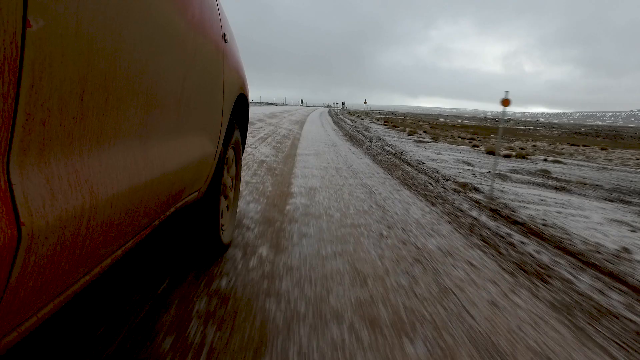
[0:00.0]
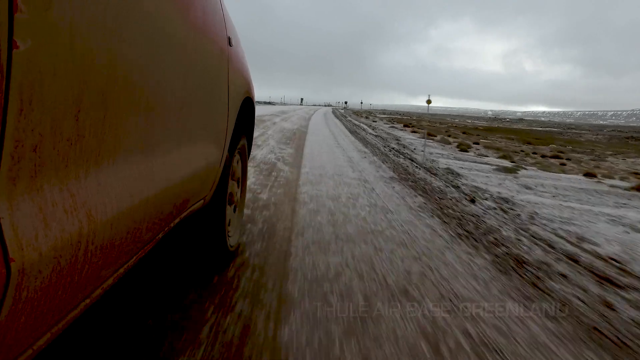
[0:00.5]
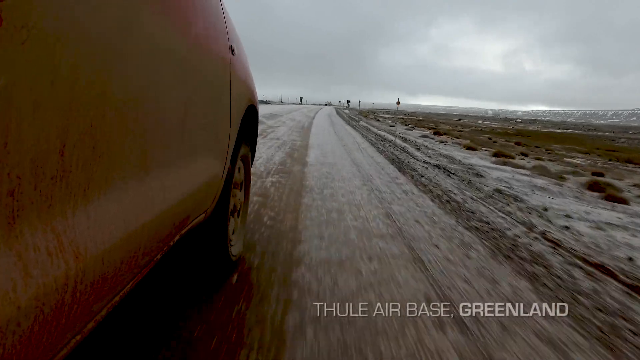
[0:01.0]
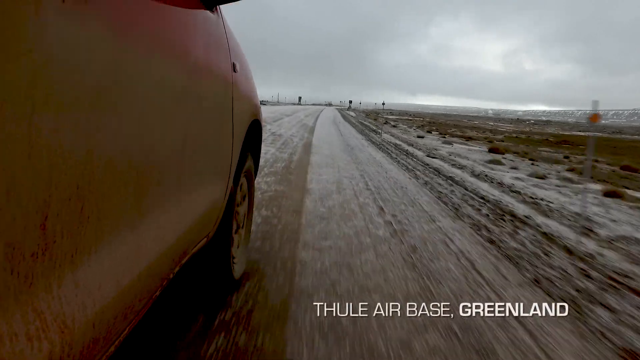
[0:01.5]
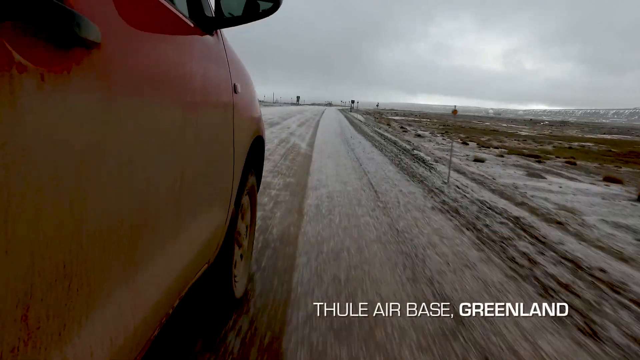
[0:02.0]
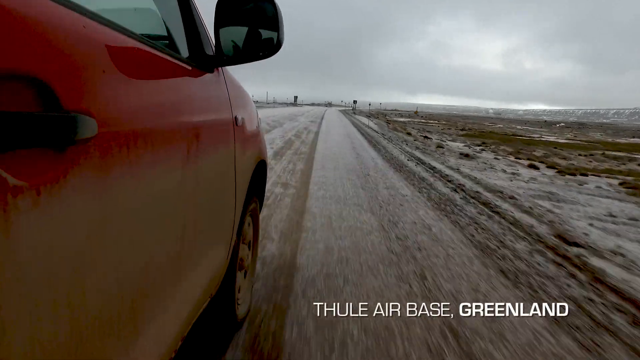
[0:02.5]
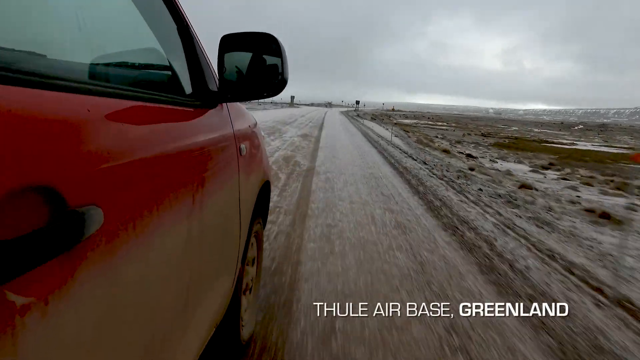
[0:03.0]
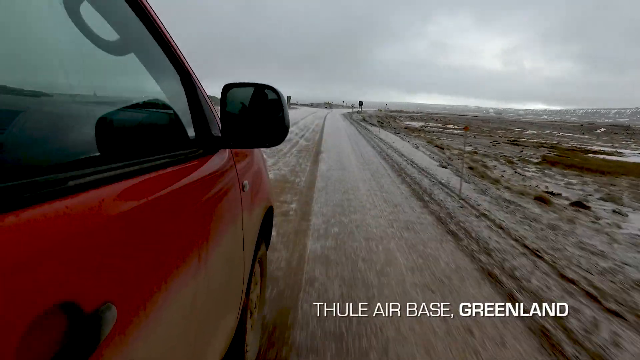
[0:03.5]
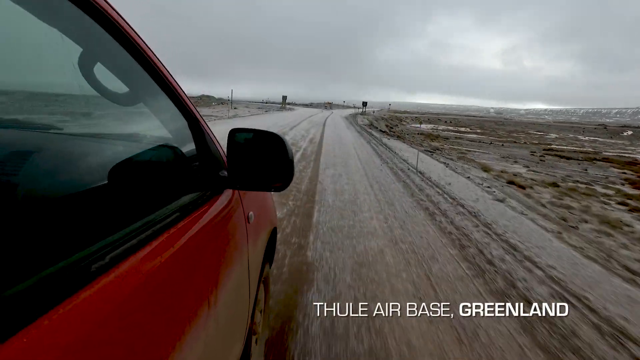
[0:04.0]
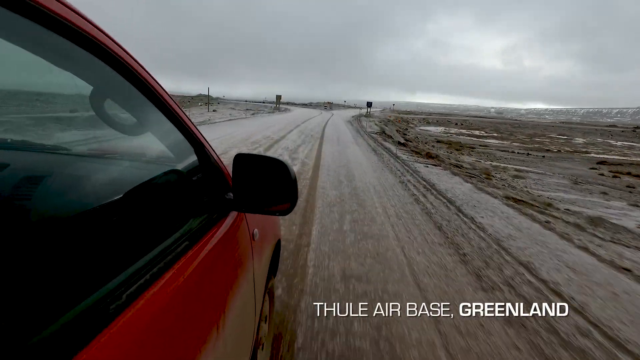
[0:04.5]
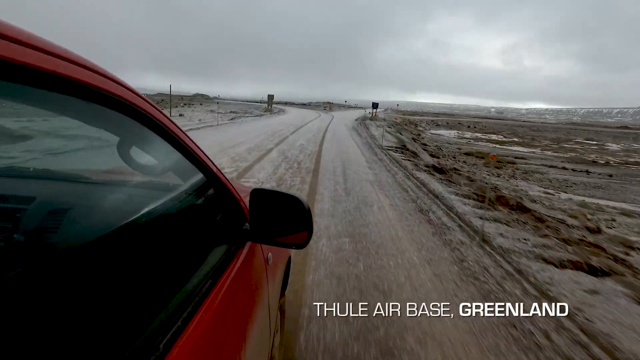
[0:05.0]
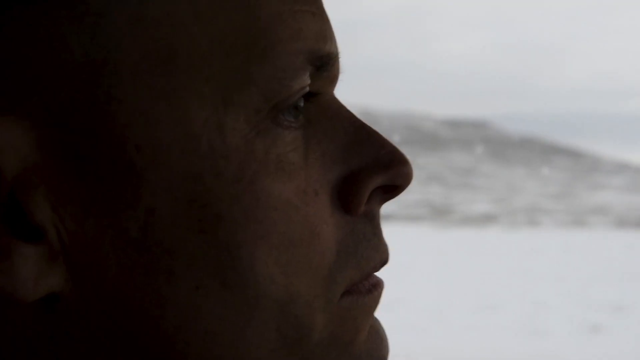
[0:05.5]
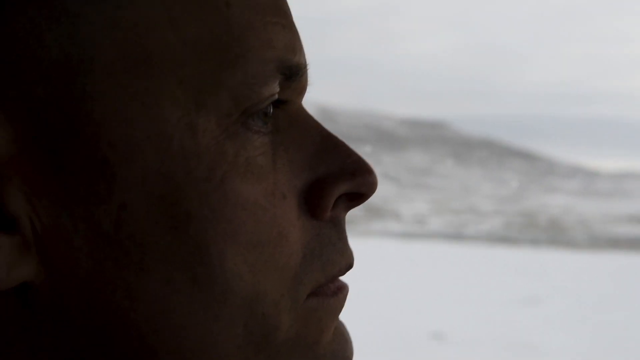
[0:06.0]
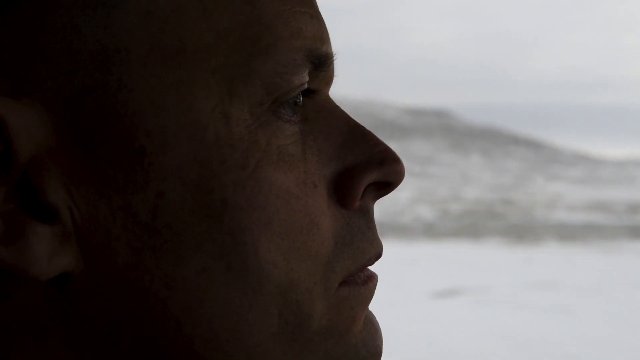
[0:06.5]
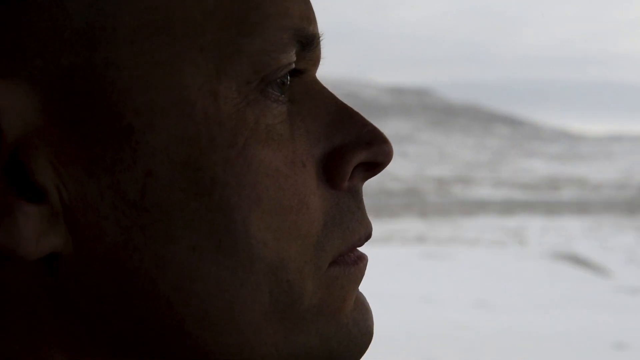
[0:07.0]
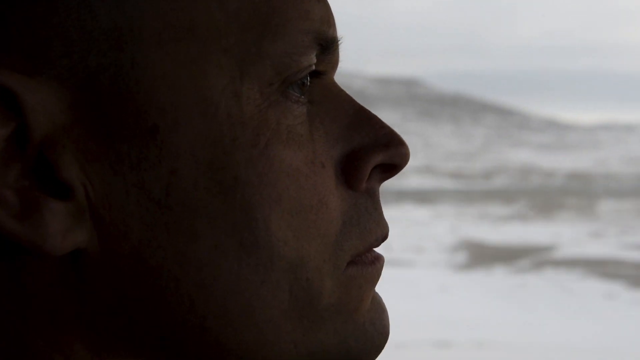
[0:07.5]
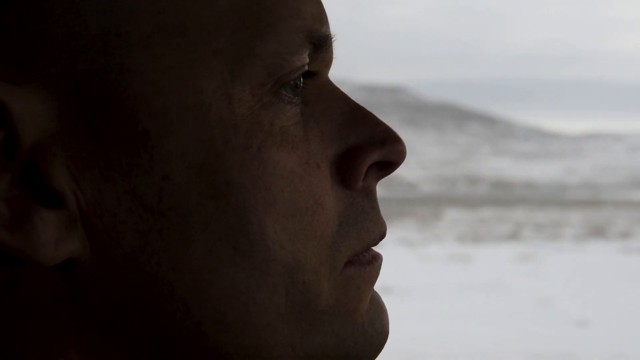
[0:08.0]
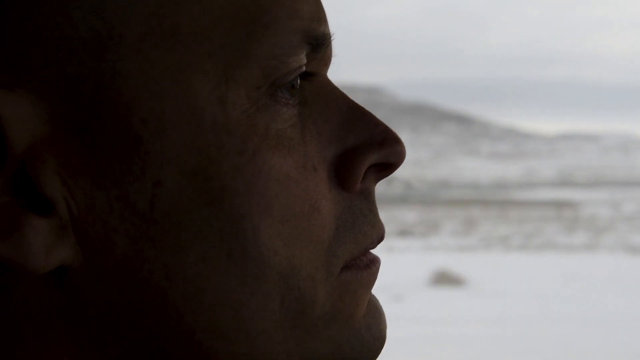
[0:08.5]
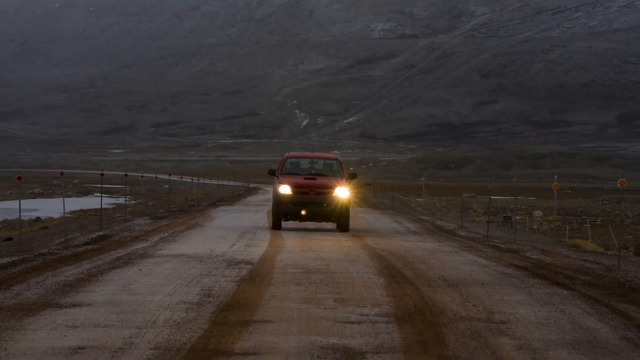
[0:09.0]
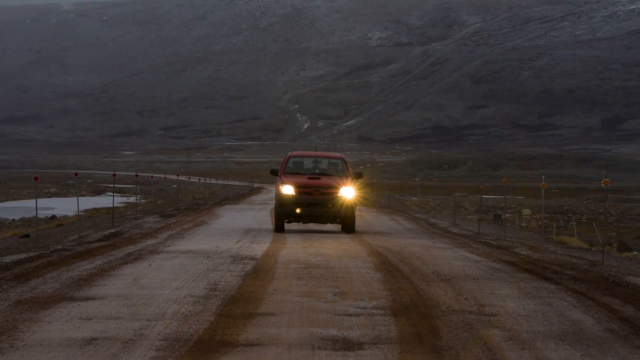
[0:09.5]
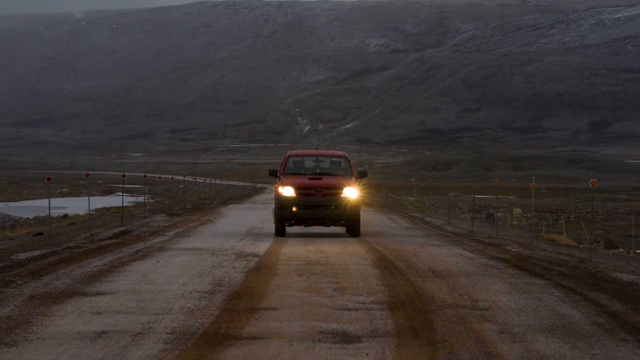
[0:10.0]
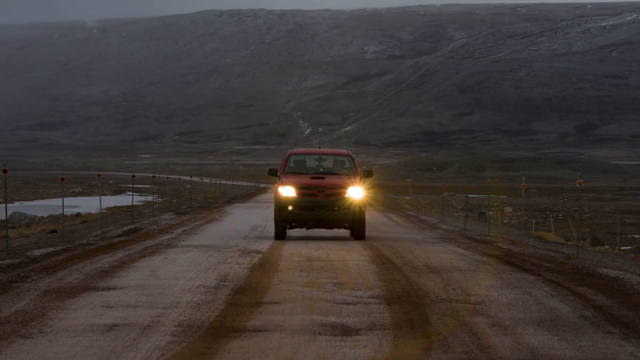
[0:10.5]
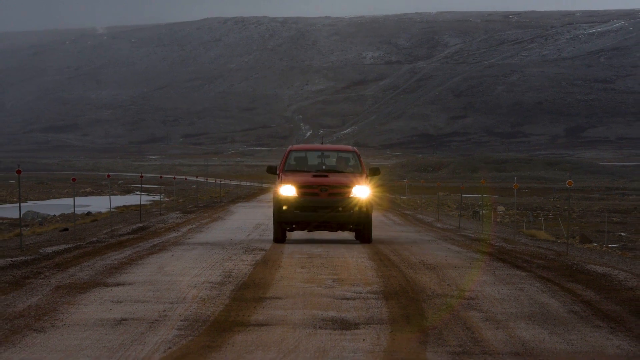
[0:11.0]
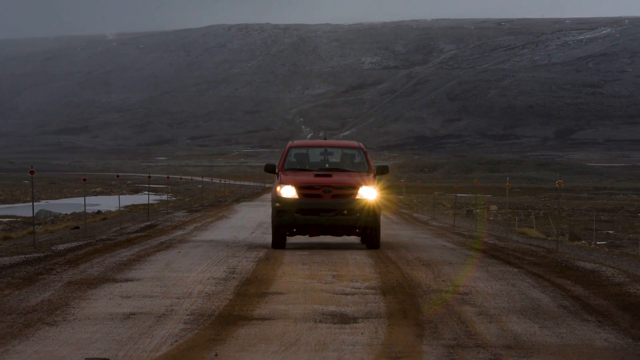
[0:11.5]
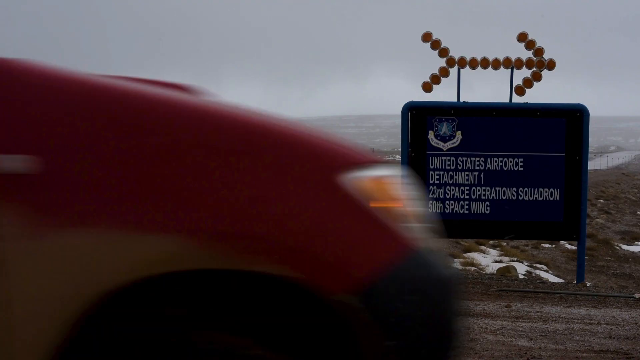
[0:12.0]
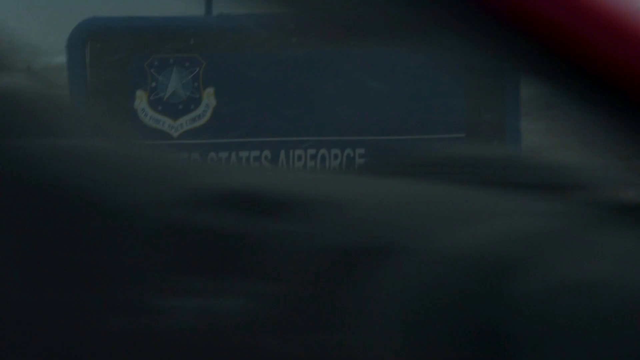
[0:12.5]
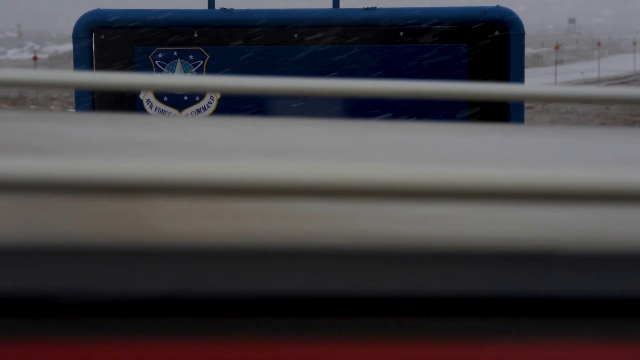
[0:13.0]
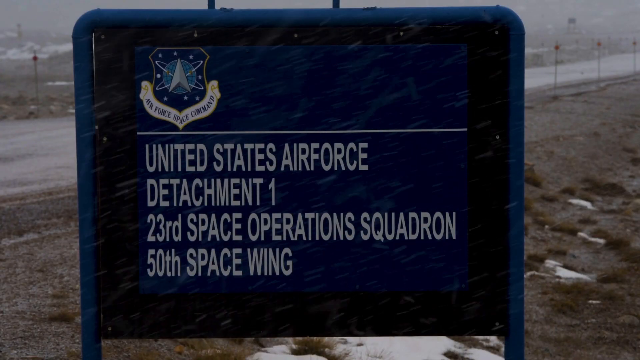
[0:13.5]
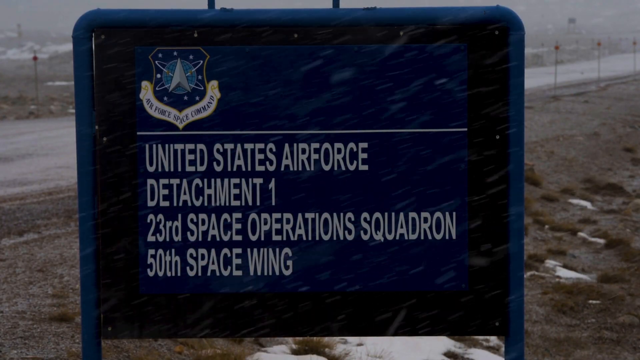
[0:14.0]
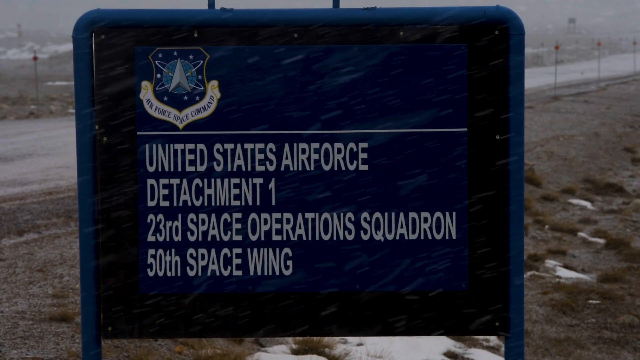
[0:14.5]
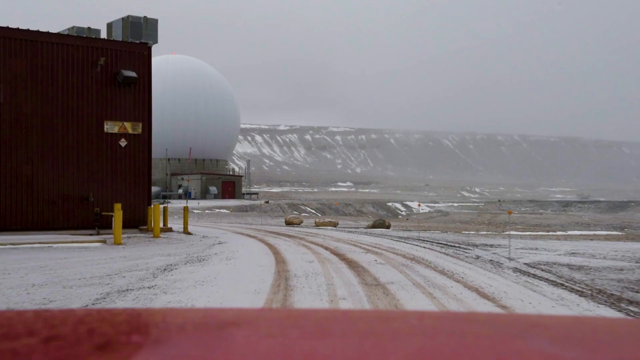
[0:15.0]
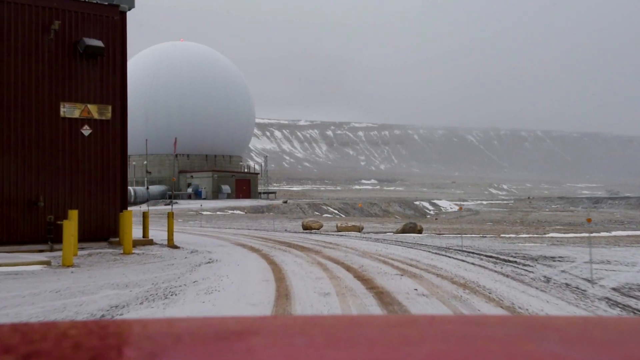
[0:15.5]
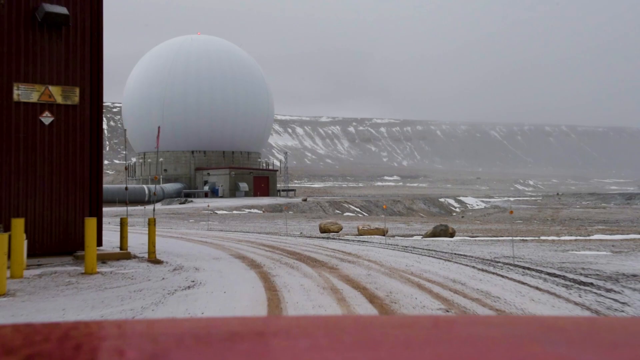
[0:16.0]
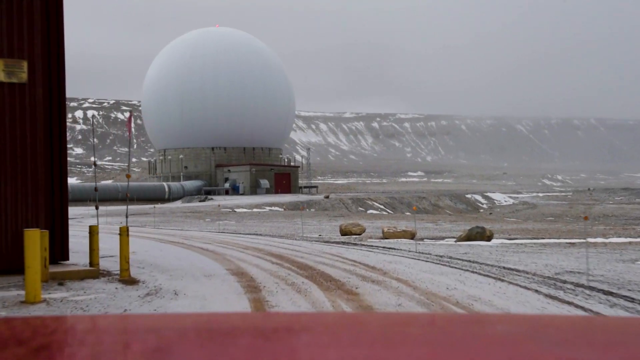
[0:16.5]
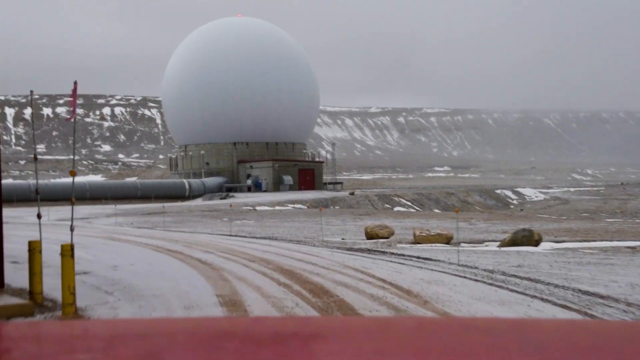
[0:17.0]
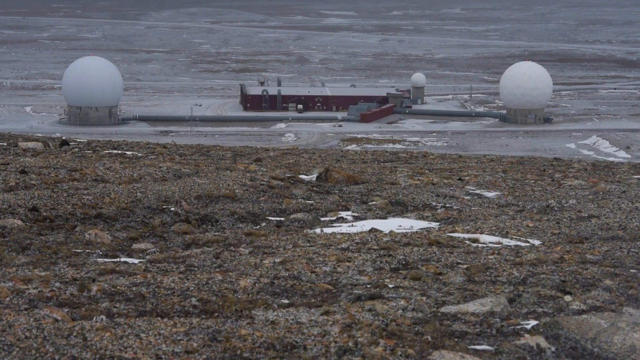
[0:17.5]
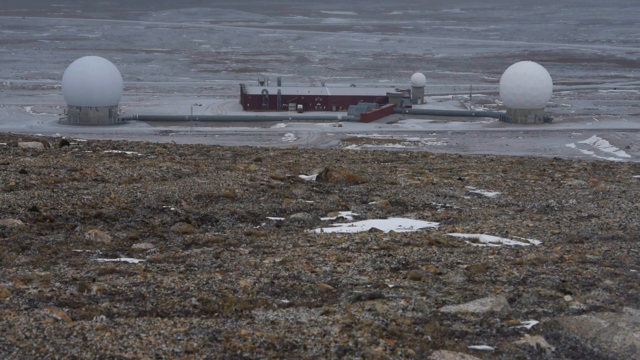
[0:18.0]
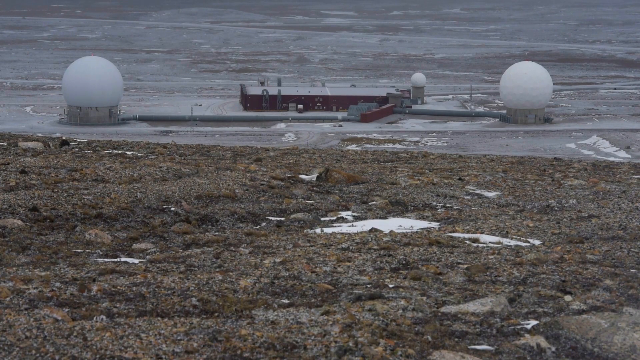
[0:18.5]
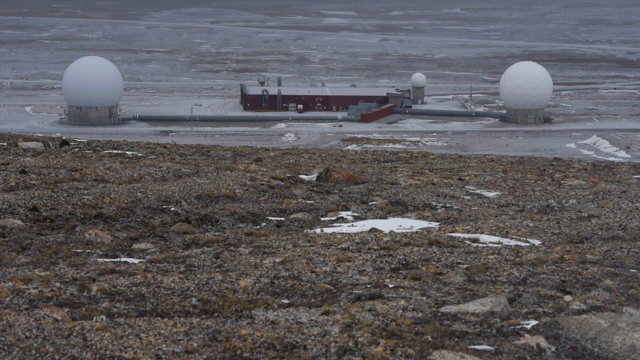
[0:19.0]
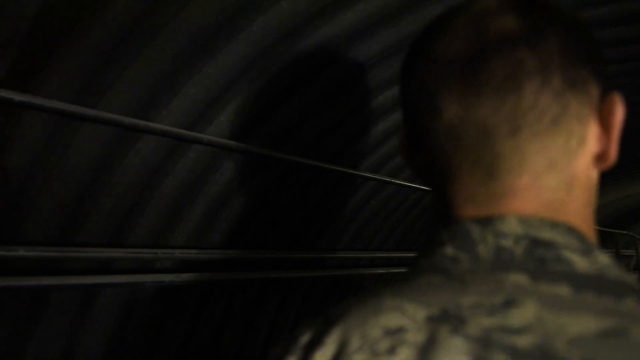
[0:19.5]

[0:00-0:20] A red car with some rust spots drives along the side of a road. Grass and metal poles bearing mile markers line the side of the road. A white caption underneath reads "Thule Airbase in Greenland." The camera pans up, giving a partial view inside the car, whose interior is black. There seems to be some snow on the airbase, so the road is apparently not actually muddy. A zoomed-in shot of the driver follows, with a snowy, mountainous landscape visible out the window behind them. A front view shows the red truck driving down the road, with the mountain behind it and snow melting on the left side of the frame. With its headlights on, the vehicle enters the United States Air Force Detachment 1 23rd Space Operations Squadron 50th Space Wing. Two large orb-like buildings stand inside the airbase.